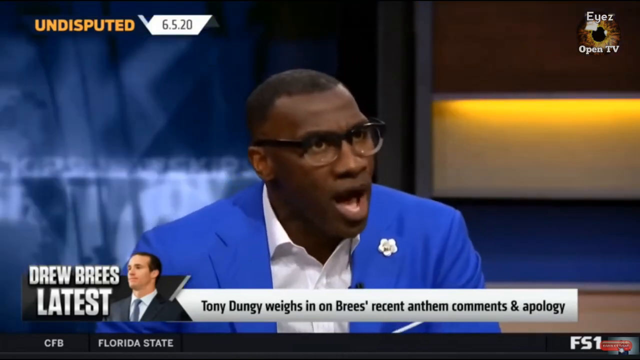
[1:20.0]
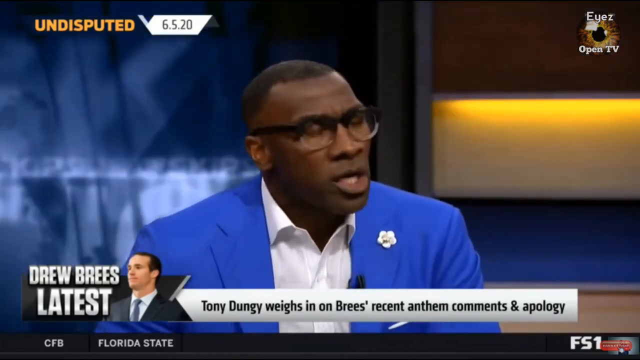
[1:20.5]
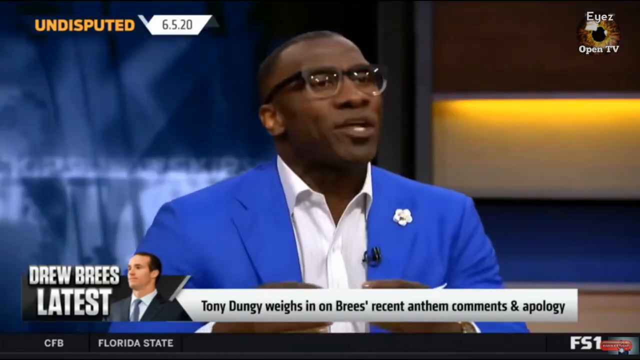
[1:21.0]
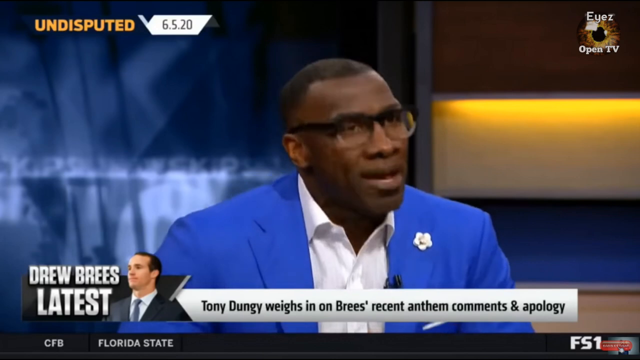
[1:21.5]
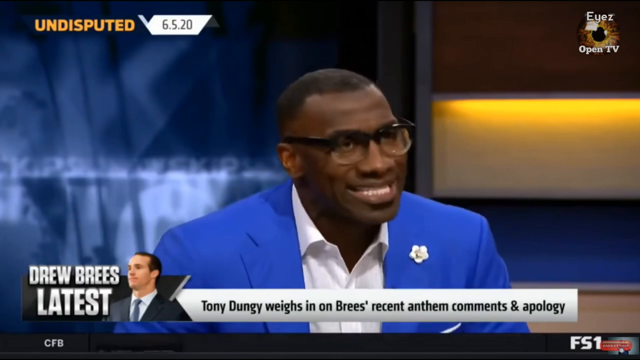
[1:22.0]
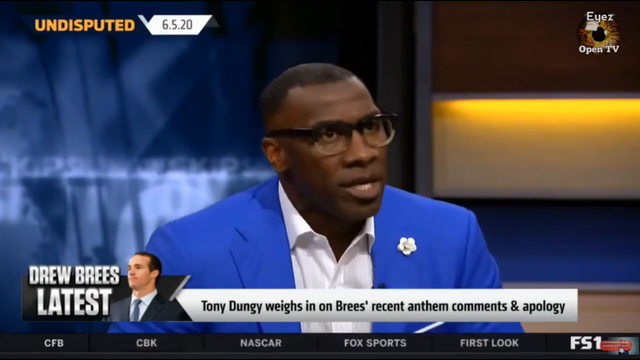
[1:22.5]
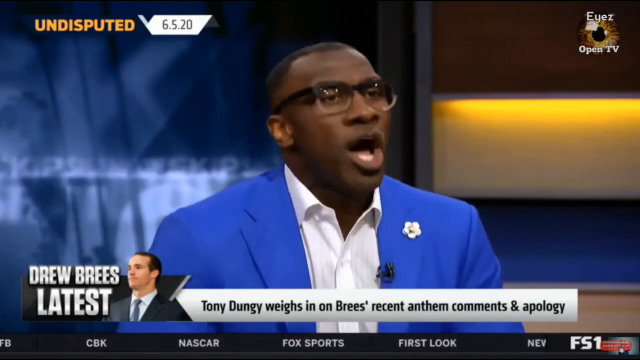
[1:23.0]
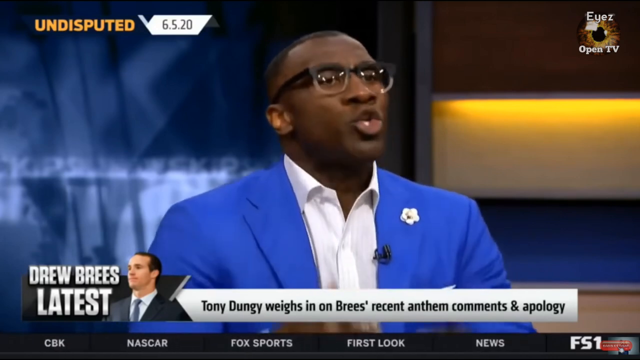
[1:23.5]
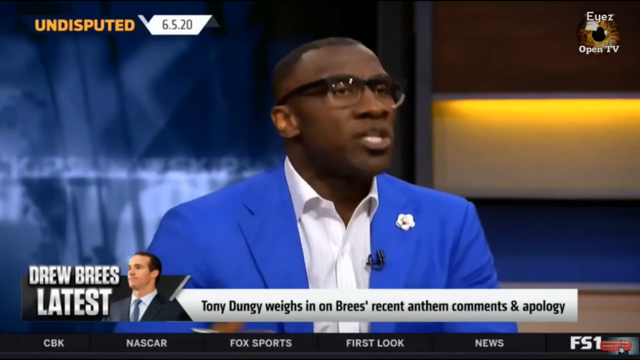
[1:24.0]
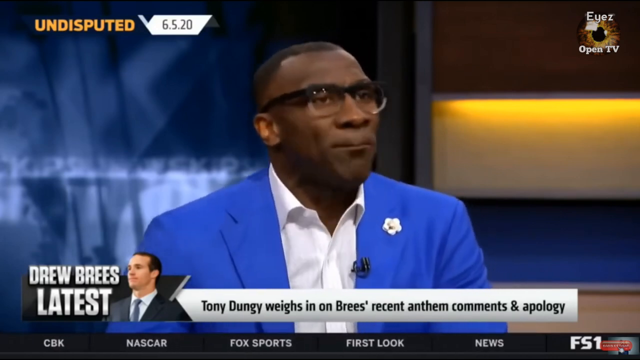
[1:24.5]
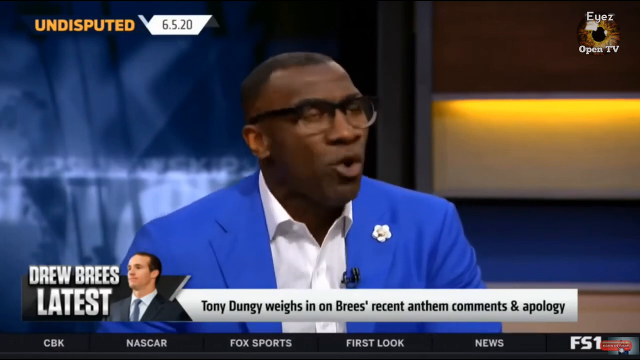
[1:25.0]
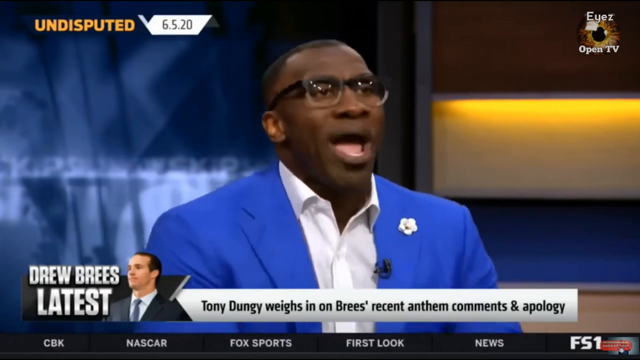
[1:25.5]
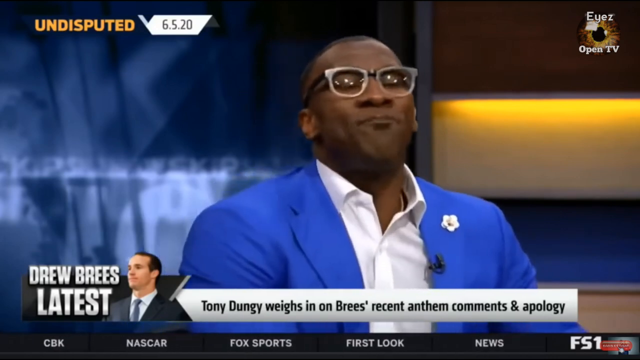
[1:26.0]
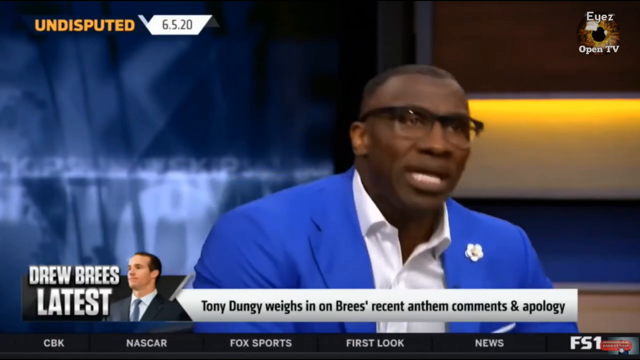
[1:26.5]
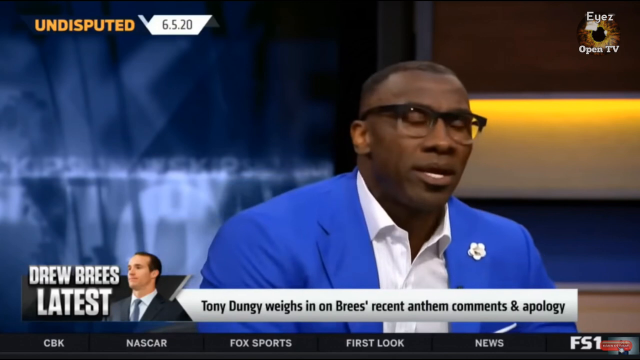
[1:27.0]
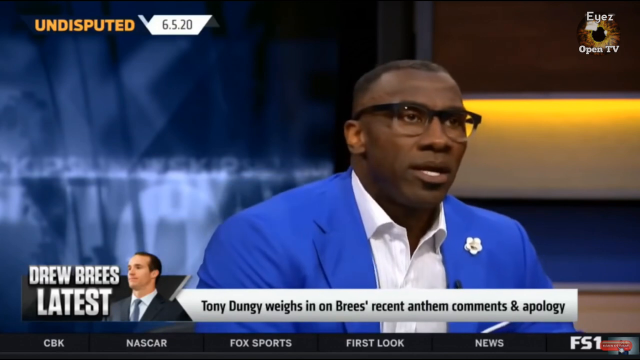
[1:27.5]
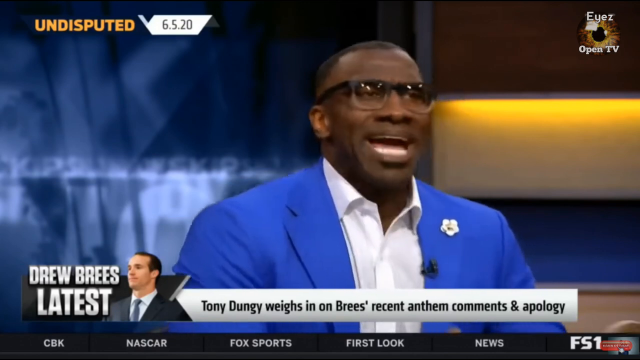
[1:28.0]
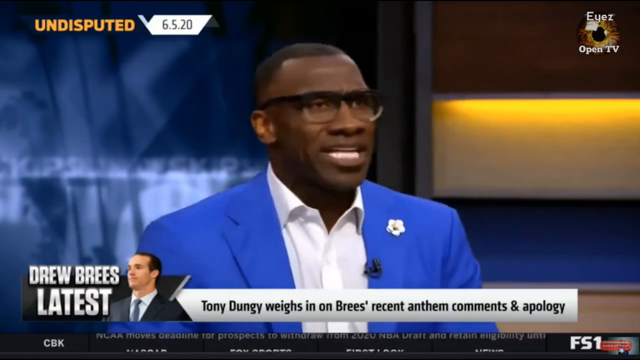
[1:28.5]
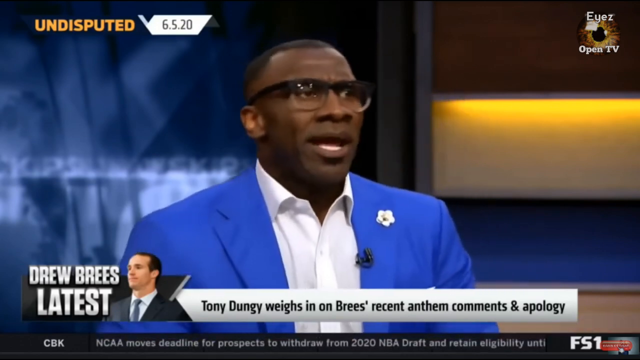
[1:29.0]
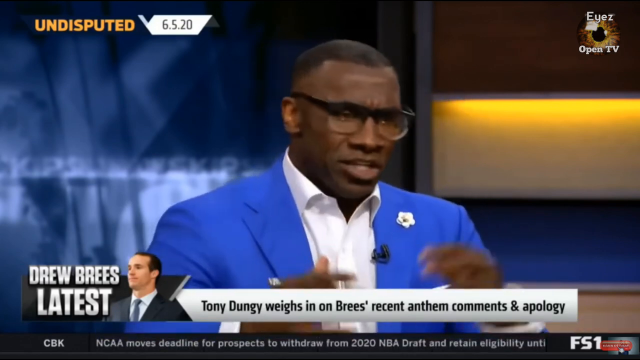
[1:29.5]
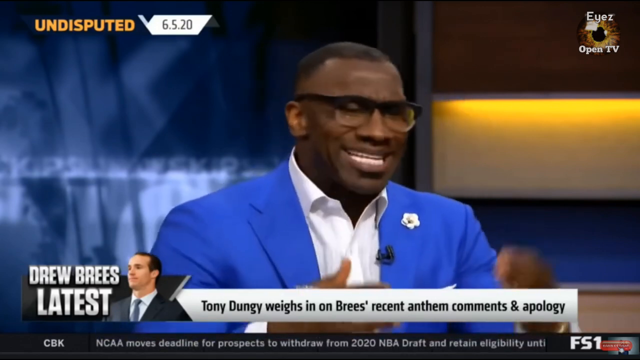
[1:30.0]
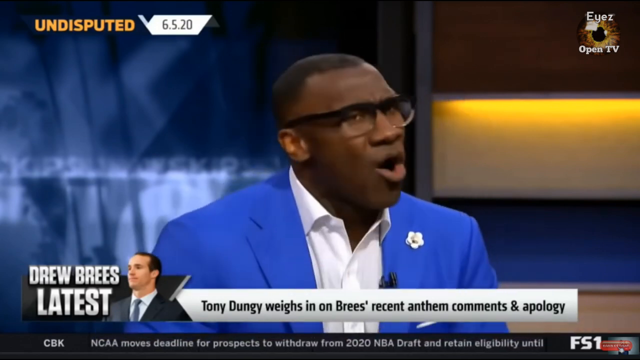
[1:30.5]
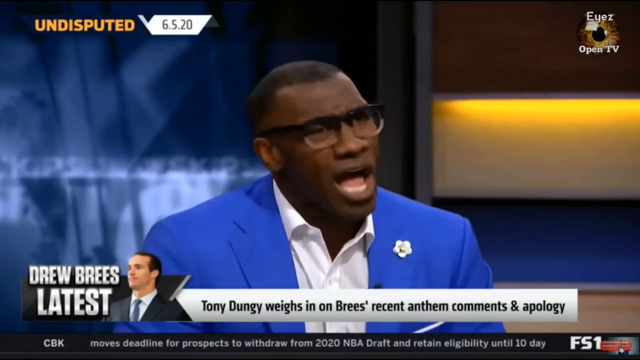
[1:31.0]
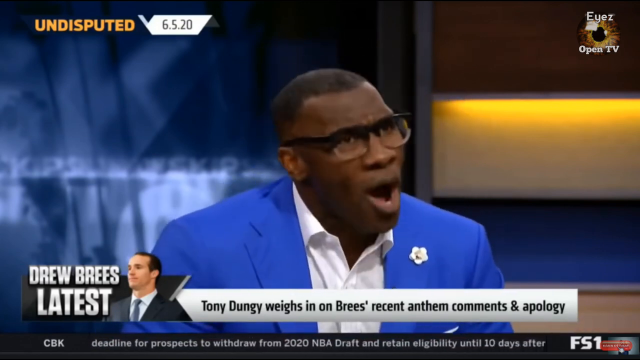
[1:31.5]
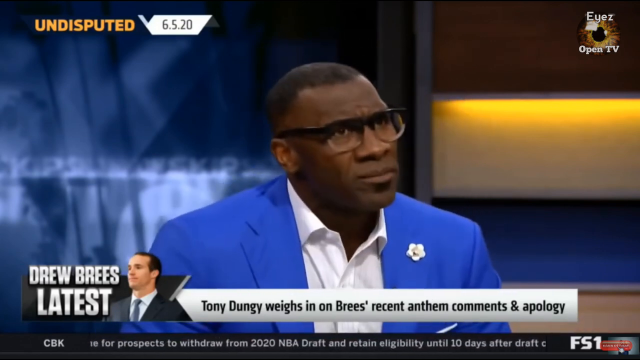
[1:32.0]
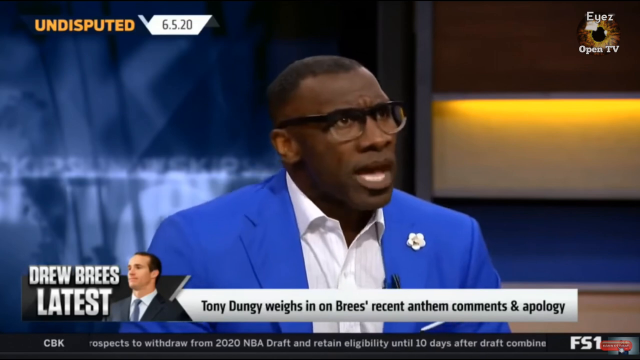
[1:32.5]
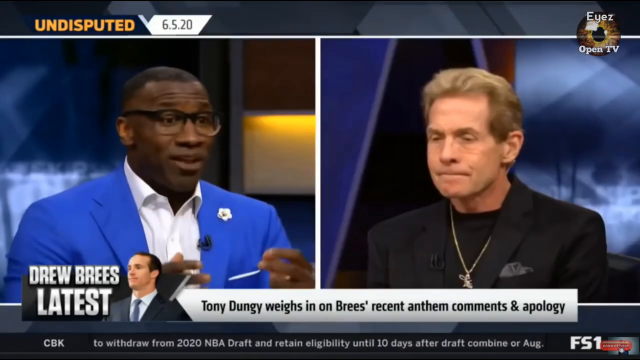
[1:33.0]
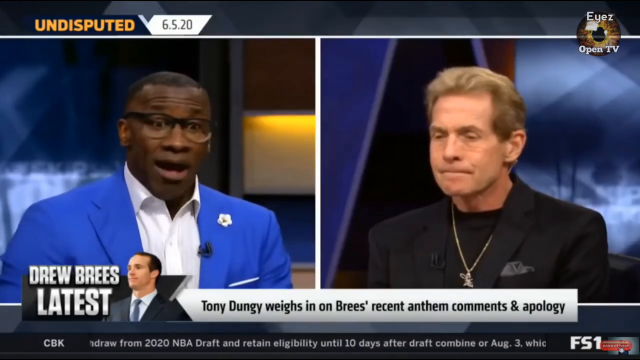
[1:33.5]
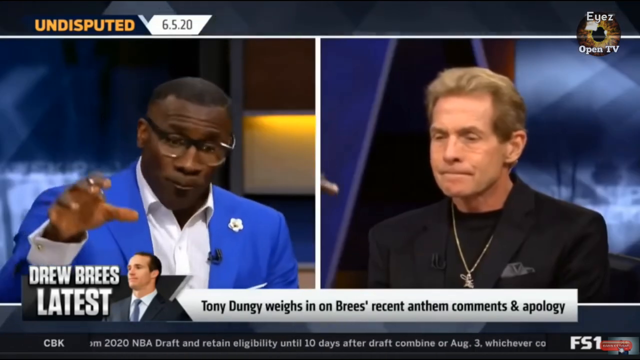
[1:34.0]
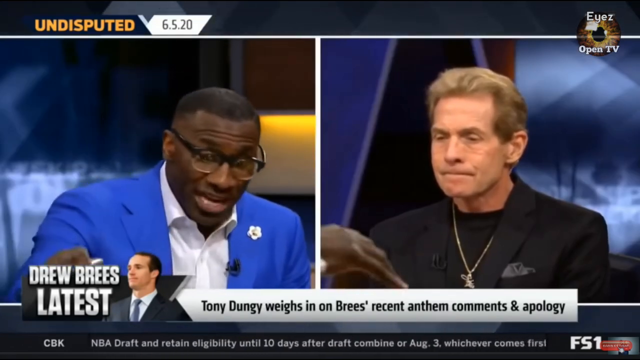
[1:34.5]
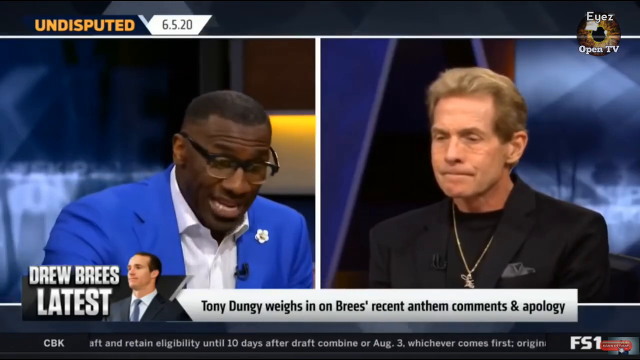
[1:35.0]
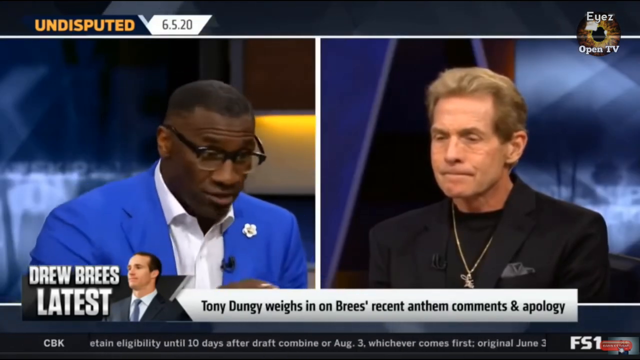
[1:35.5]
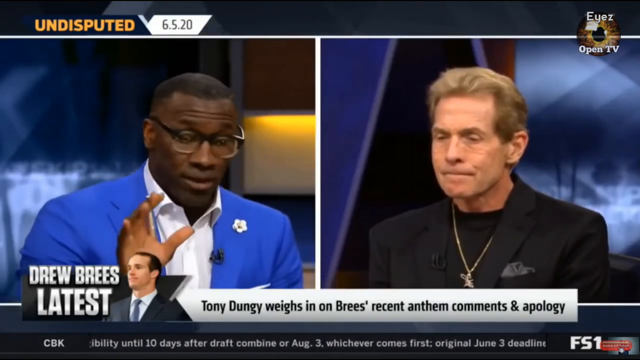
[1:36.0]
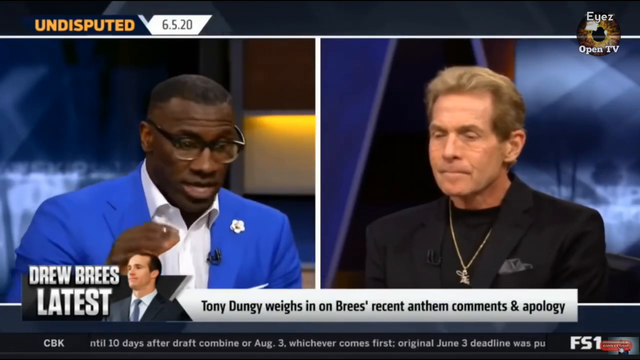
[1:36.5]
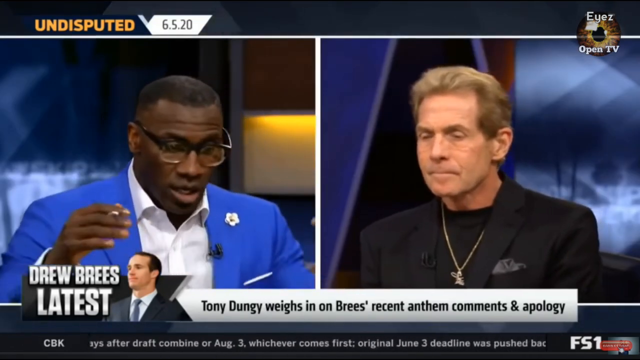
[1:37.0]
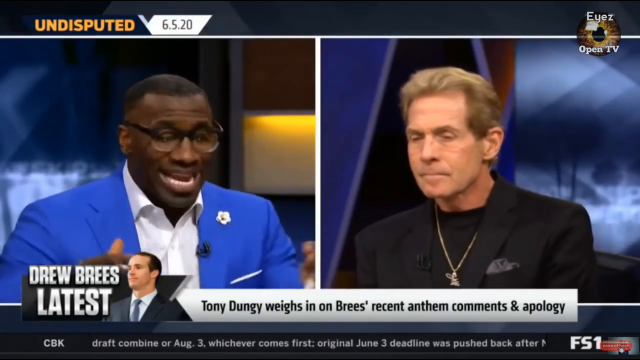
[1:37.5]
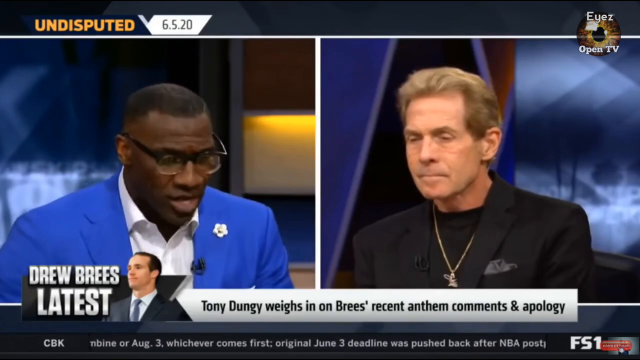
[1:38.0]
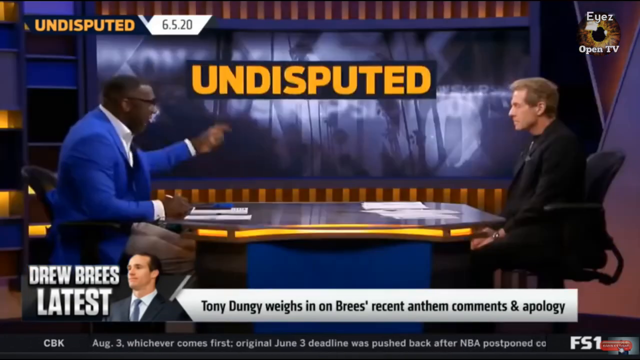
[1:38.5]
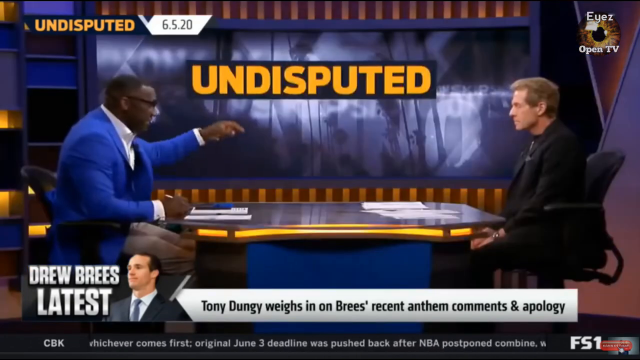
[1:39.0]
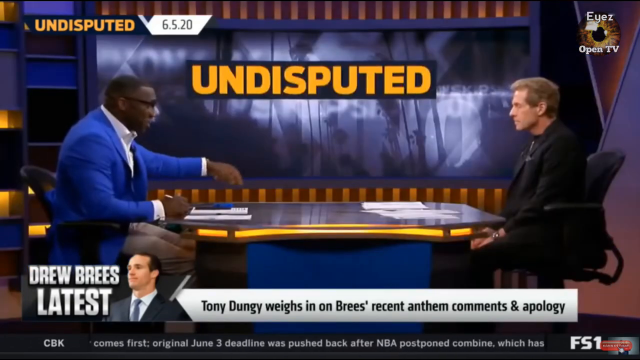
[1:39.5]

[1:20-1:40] In the upper left-hand corner, "UNDISPUTED" appears in orange capital letters, followed by "6.5.20" in black font. In the upper right-hand corner is "EYEZ" with a capital E, with what looks like a brown eye beneath it and then "Open TV". Shannon Sharp wears a blue blazer with a white flower pin and a small microphone pin, a white button-down shirt, and black glasses; the lower part of his body is not visible. At the bottom, "Drew Brees latest" appears with a white man in a blue tie, along with "Tony Dungy weighs in on the Brees recent anthem comments and apology". Shannon Sharp is still talking, seemingly very engaged in what he is saying and using his hands. His eyebrows go up, as if he may be asking a question. He points, and he has a paper, possibly what he is pointing to. The other man is just listening.